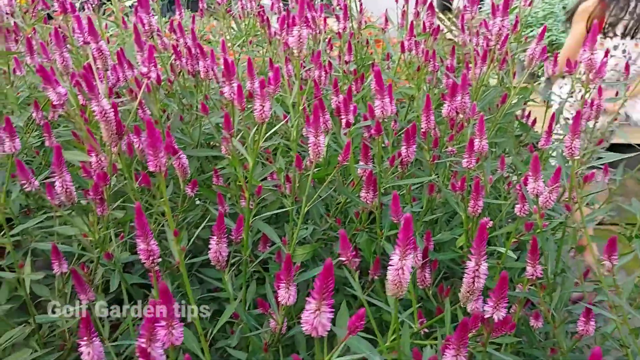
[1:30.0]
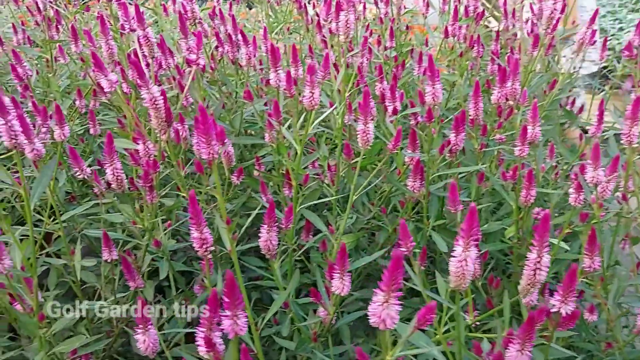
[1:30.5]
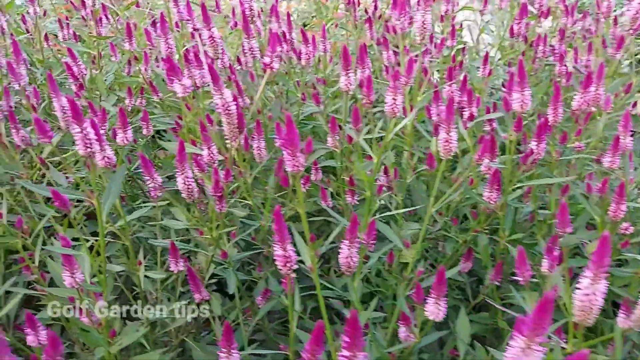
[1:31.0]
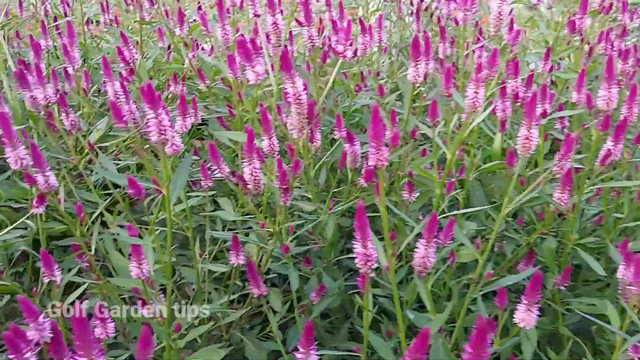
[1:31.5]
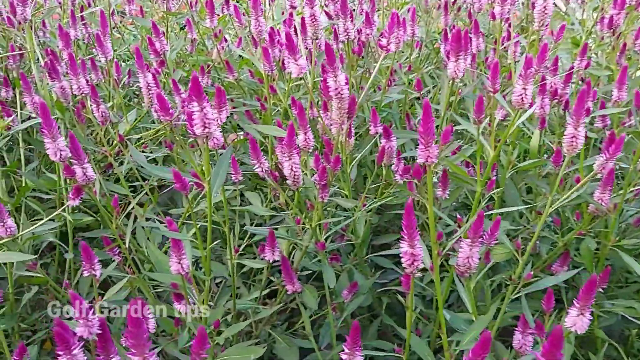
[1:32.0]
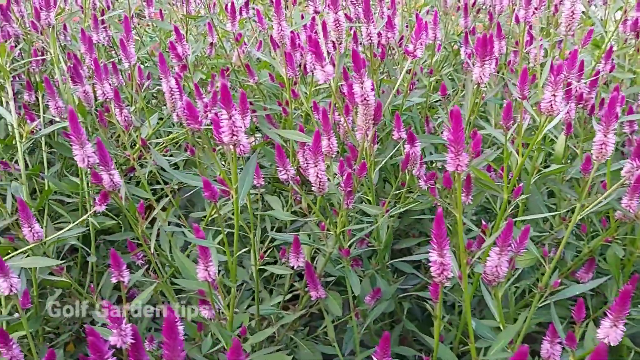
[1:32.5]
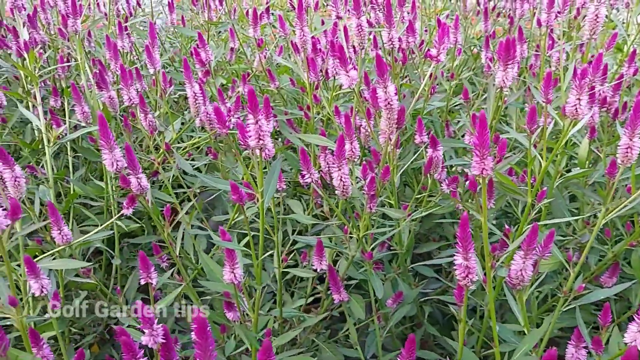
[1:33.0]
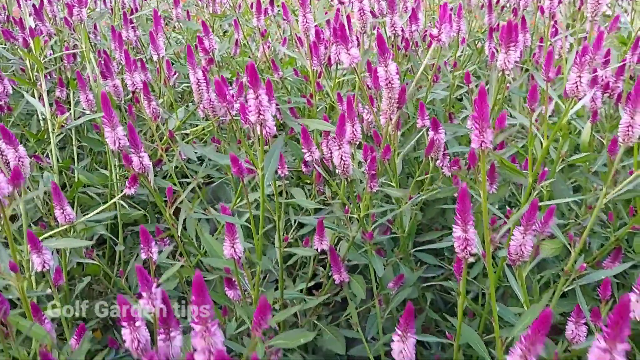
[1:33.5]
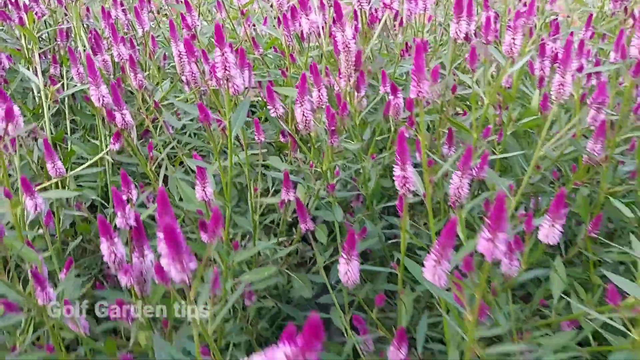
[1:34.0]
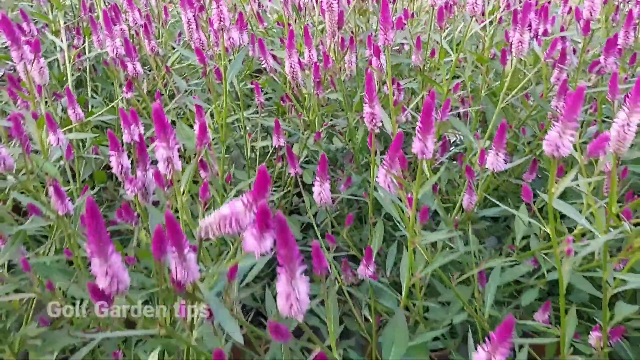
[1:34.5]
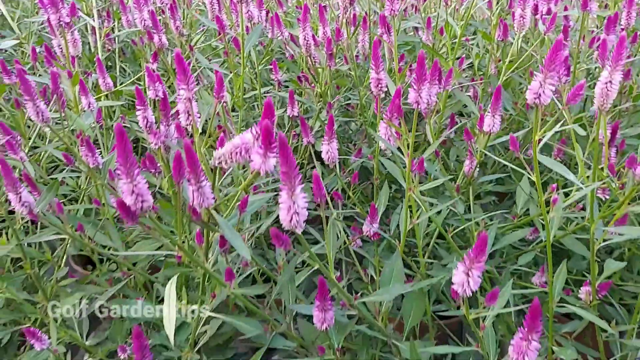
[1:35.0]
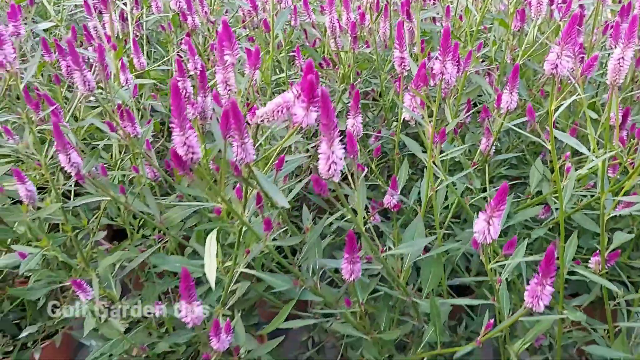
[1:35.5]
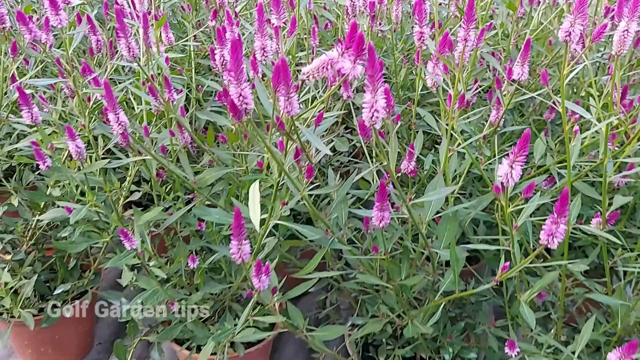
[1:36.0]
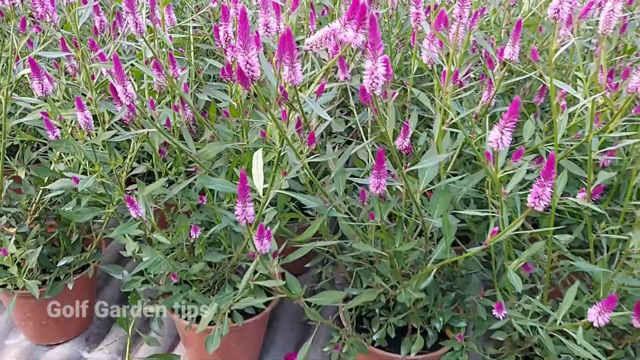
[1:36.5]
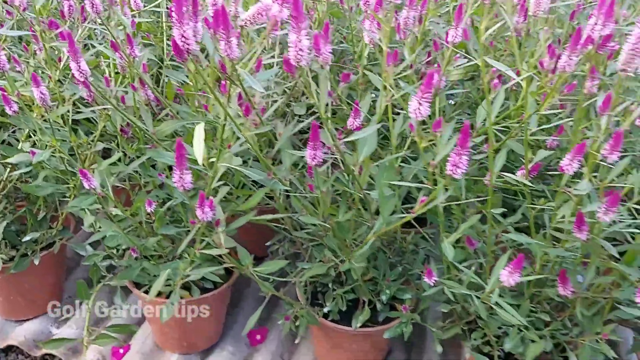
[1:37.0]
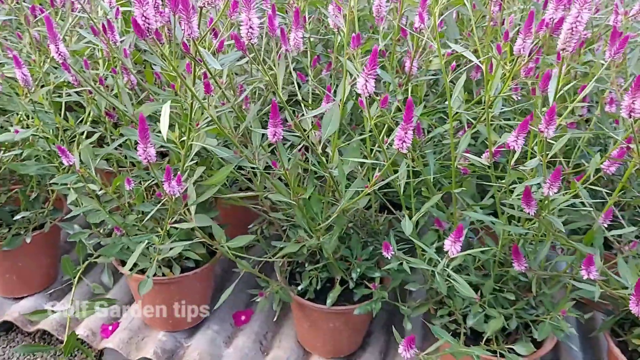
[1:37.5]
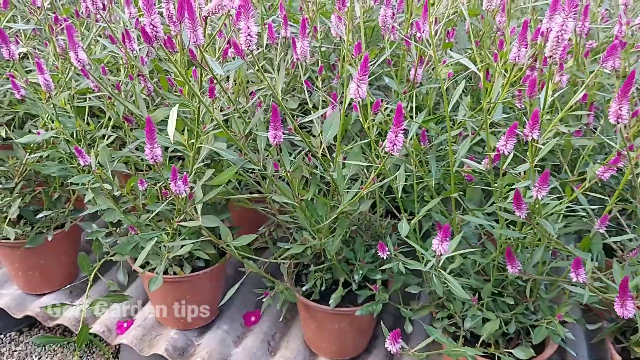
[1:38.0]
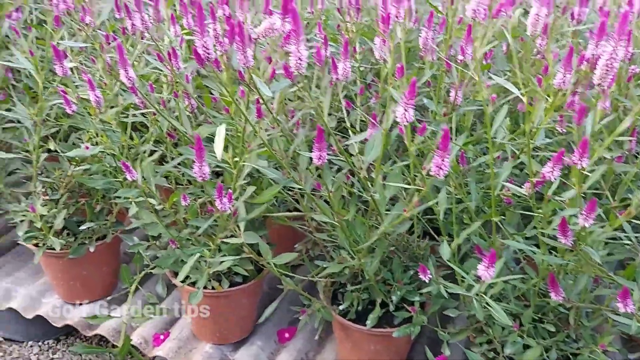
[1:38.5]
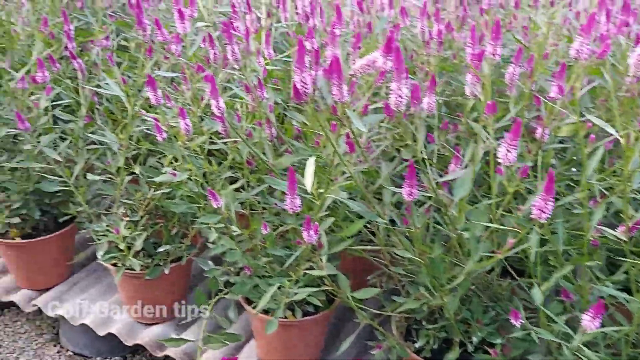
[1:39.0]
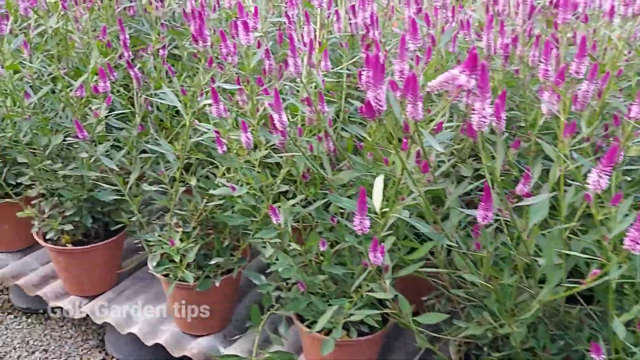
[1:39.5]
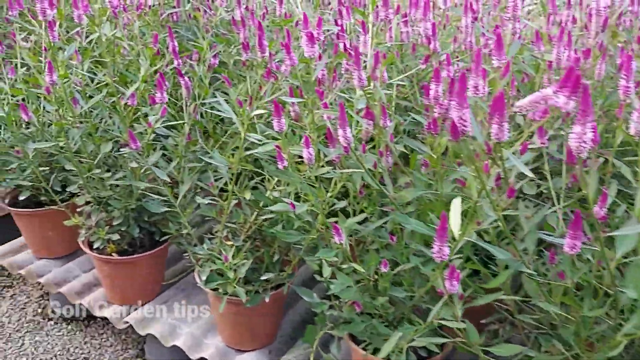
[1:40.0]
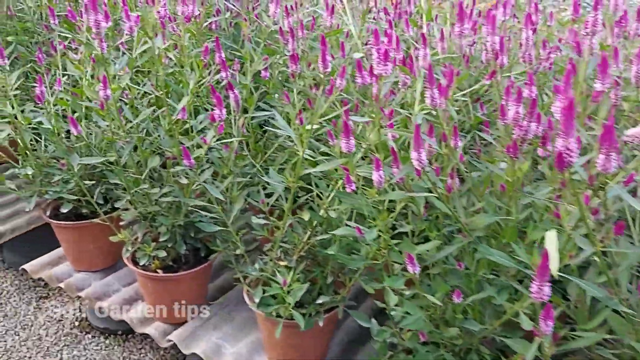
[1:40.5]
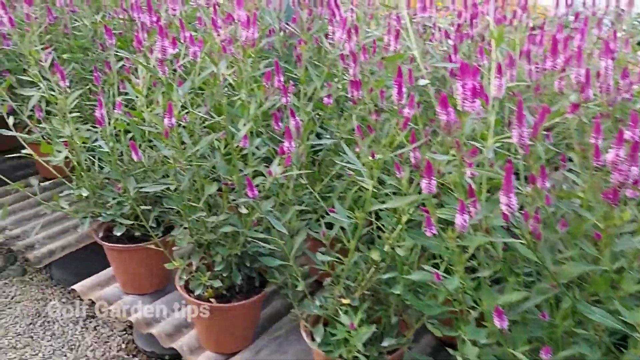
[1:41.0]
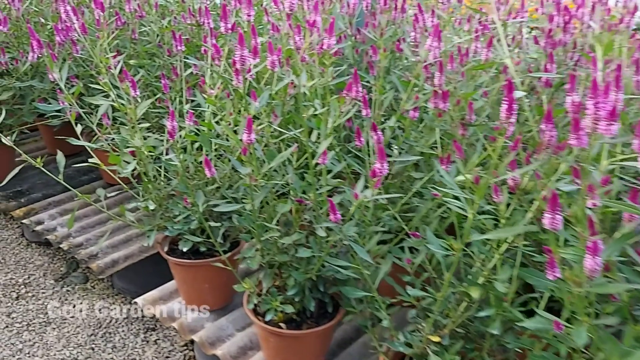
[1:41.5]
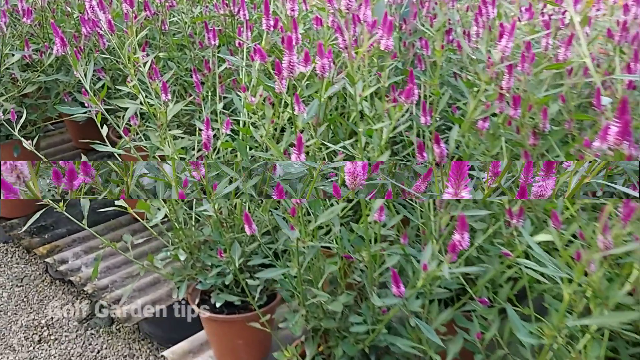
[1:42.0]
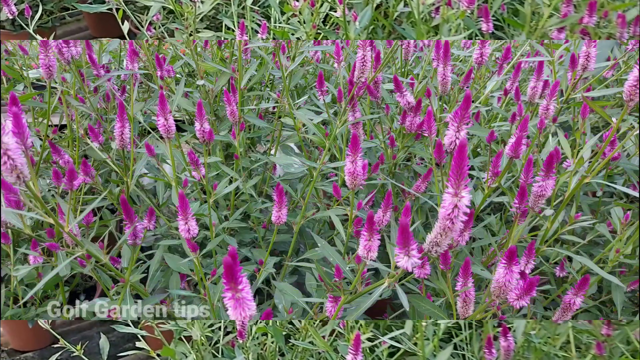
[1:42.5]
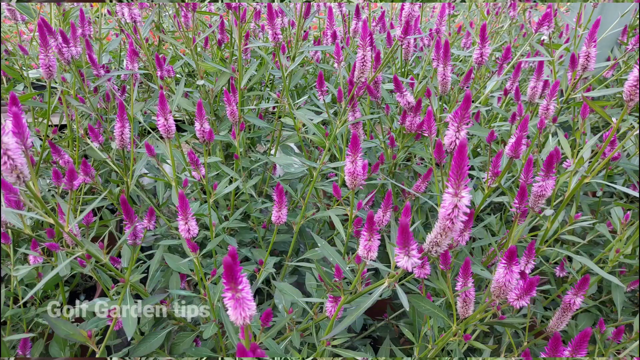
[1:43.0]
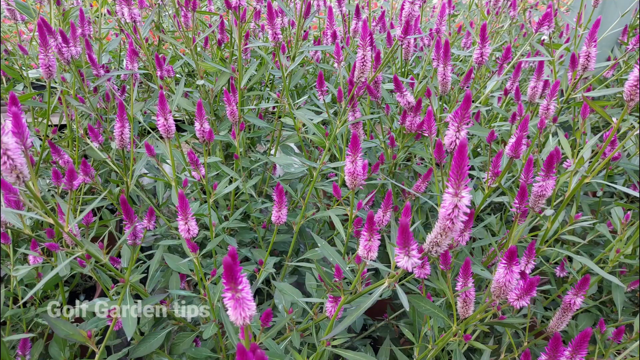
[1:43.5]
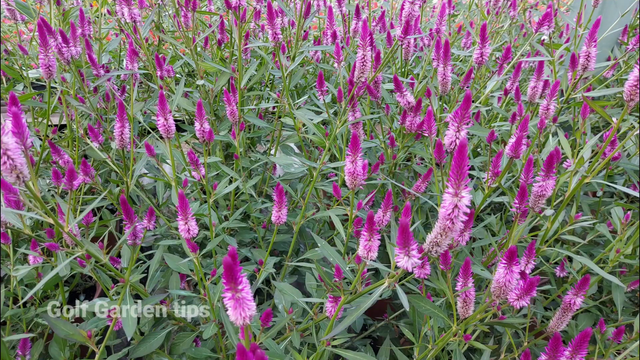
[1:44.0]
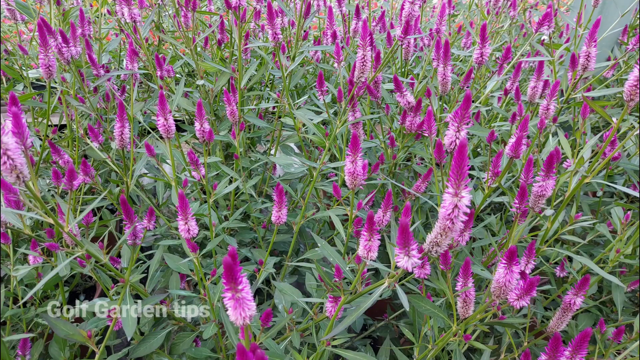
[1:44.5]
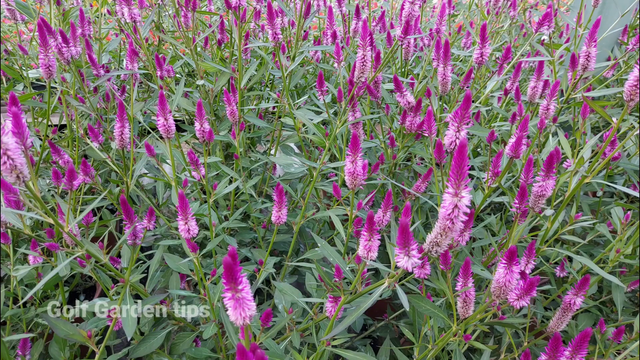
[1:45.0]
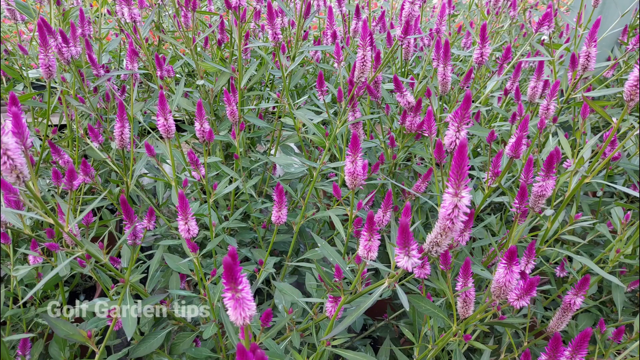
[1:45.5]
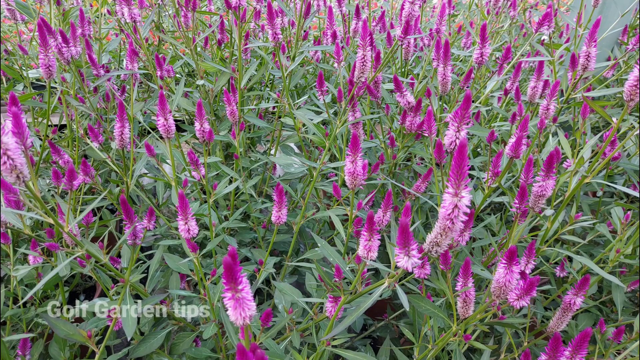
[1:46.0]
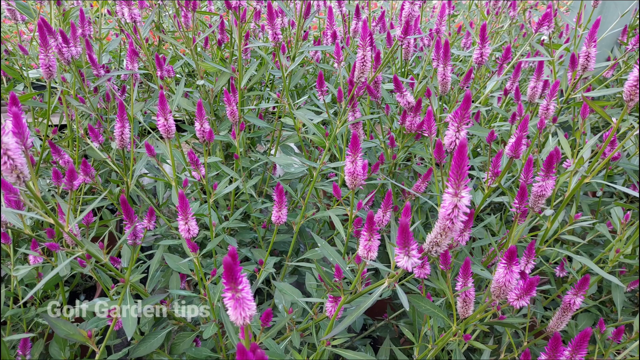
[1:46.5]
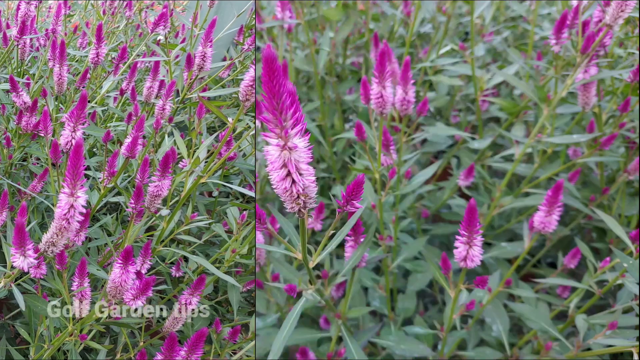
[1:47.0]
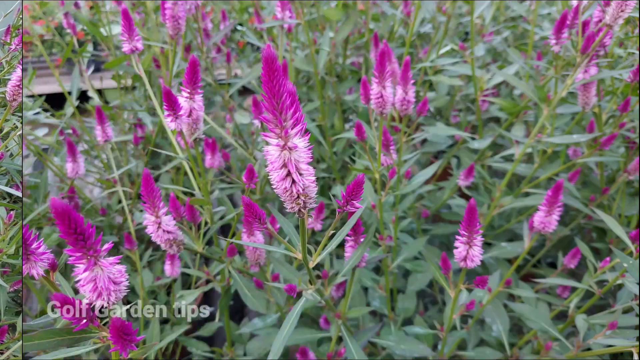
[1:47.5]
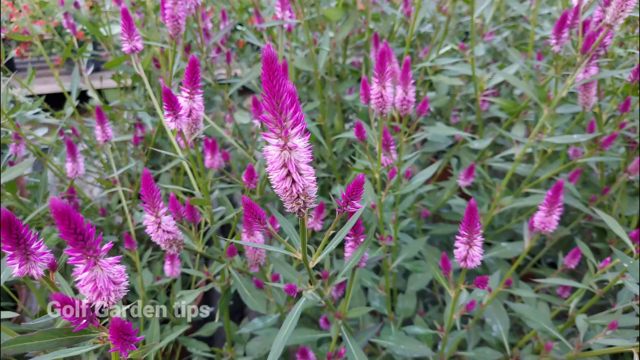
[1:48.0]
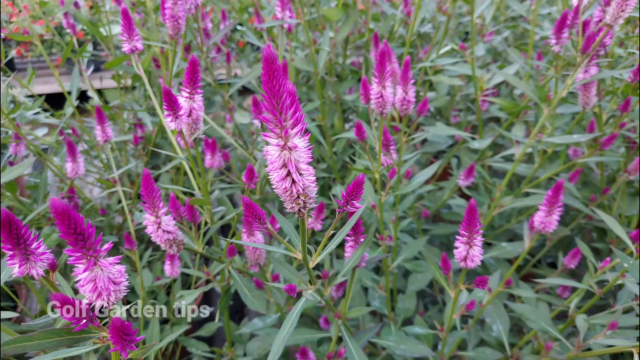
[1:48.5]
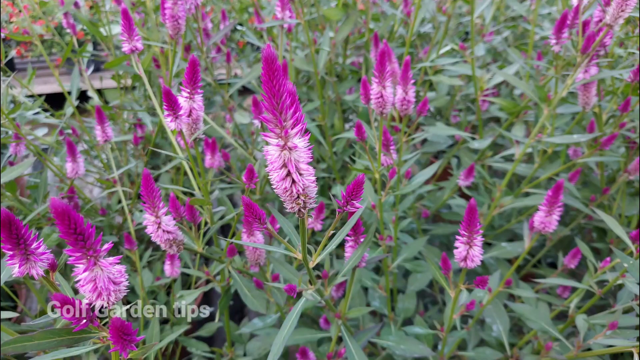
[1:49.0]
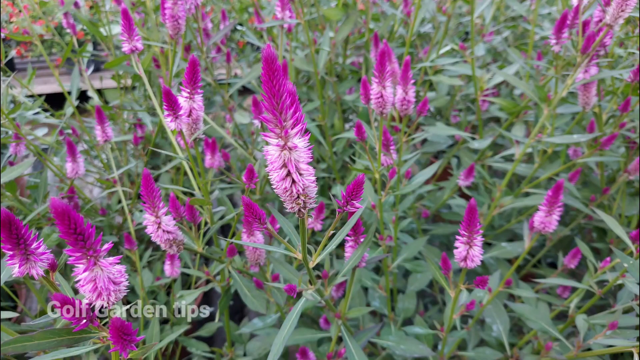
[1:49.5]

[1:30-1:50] The child is still in the background. She has shoulder-length brown hair and wears a white top, and she seems to be exploring the garden while the person in the foreground explains the plant being shown. The screen still reads "golf garden tips". The camera finally pulls all the way out, showing multiple pots of this plant resting on a sort of corrugated steel with drainage. The video moves to a slideshow of the plant's buds before returning to the plant itself, and the person continues to walk down the row of plants on the table structure as though giving the garden tips in real time. Nothing appears on screen besides the text "golf garden tips". The close-up photos of the plant move in a slideshow style, sliding up and down and in from opposite sides, before holding on a screen showing the bud more closely. The video then cuts back to the person explaining as they move back toward the right side of the garden, walking with the camera facing down; the row of plants behind, made up of marigolds, houseplants, and the plants with white flowers, can still be made out.